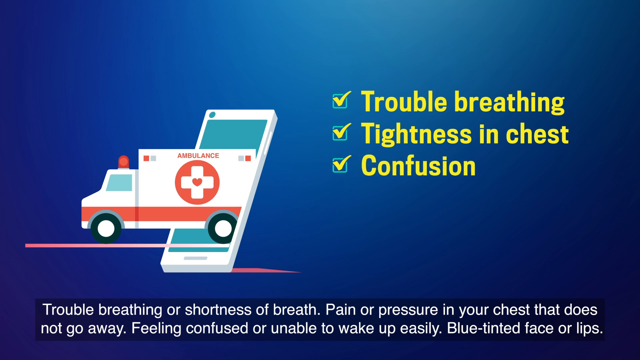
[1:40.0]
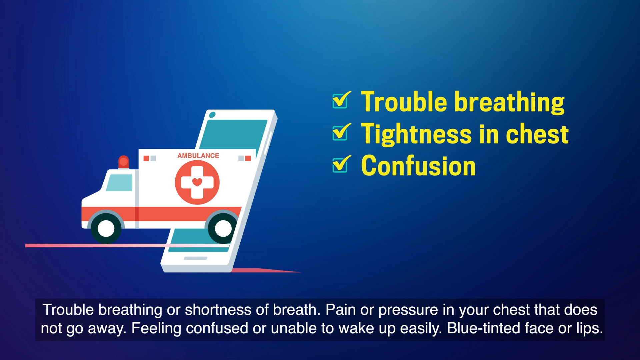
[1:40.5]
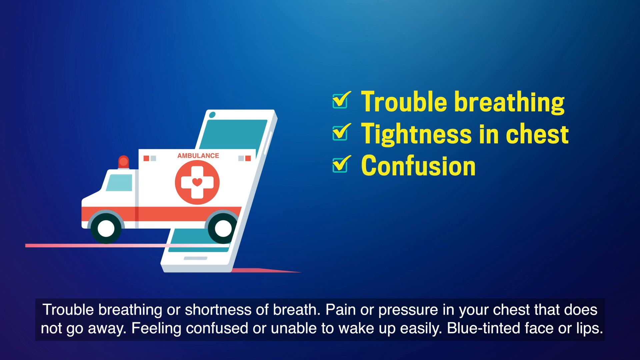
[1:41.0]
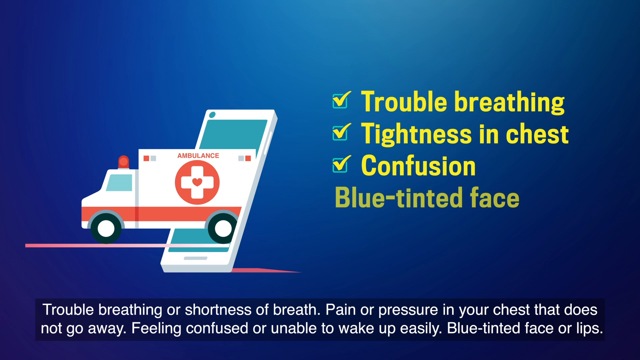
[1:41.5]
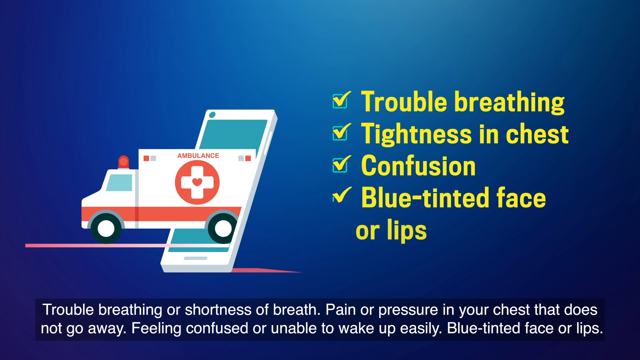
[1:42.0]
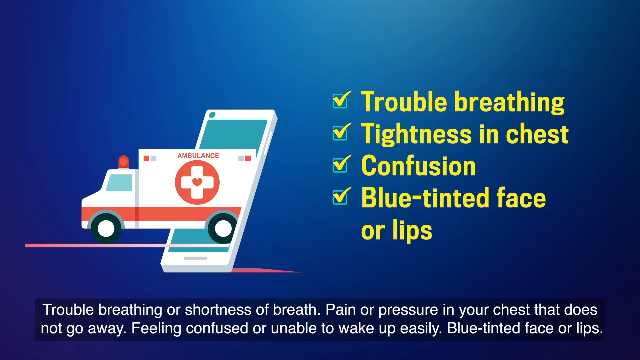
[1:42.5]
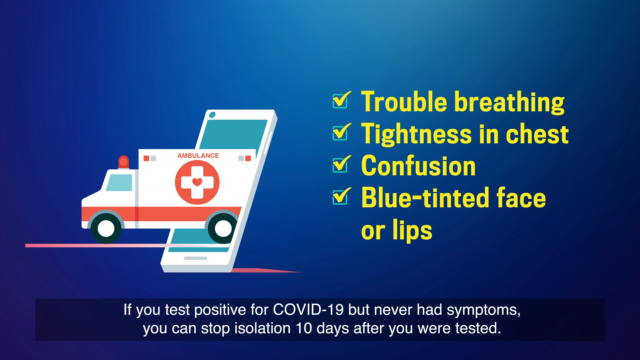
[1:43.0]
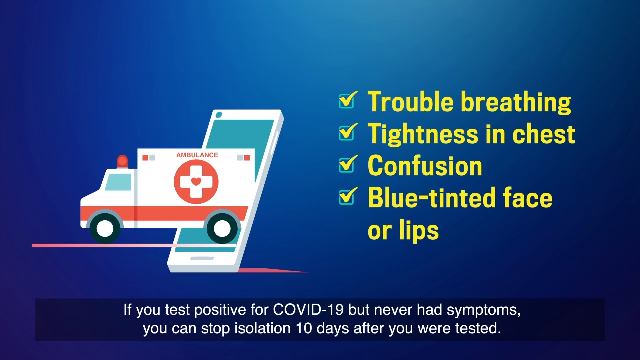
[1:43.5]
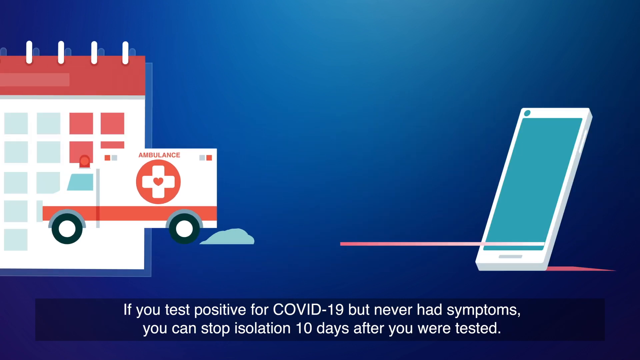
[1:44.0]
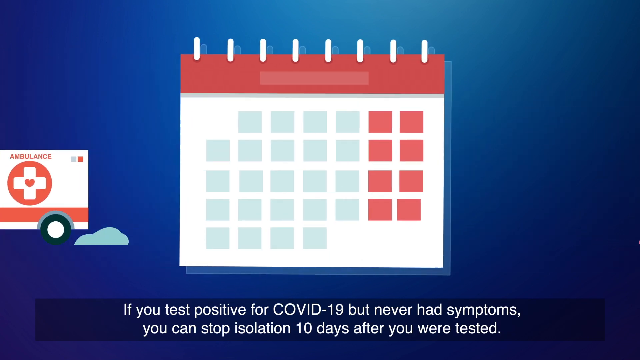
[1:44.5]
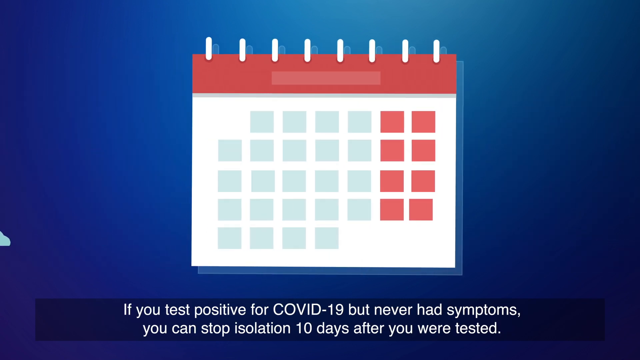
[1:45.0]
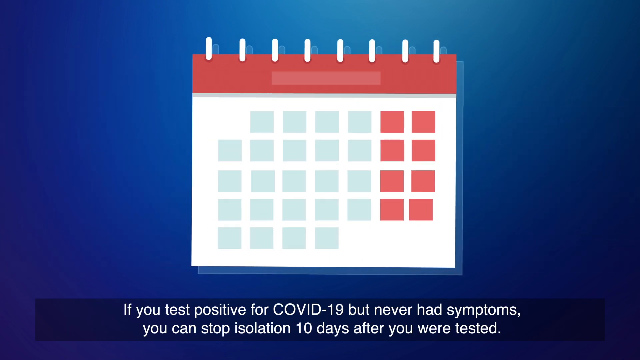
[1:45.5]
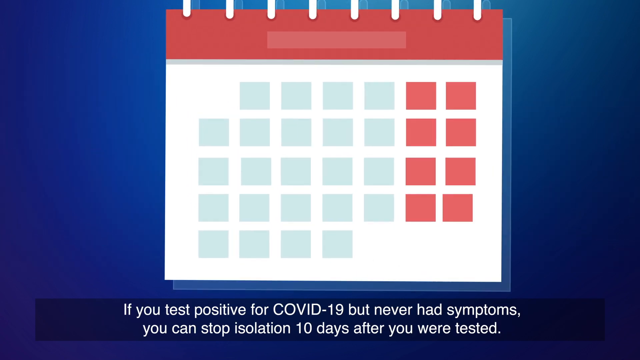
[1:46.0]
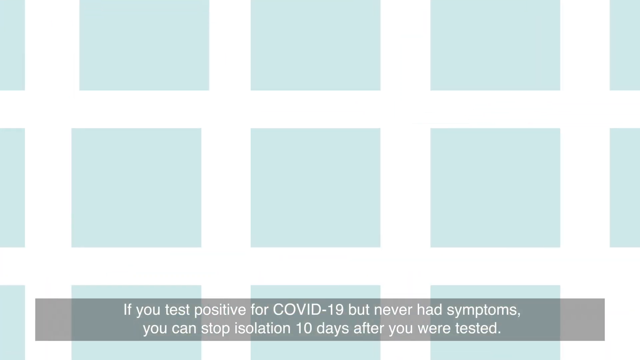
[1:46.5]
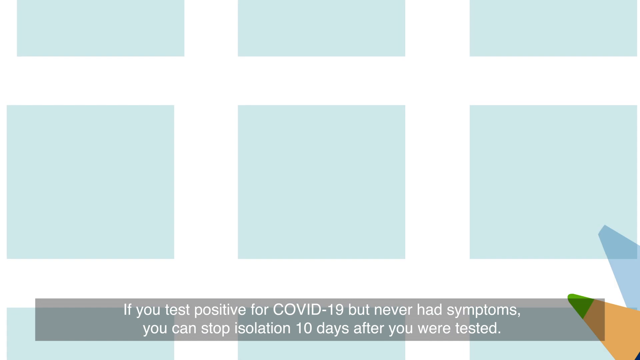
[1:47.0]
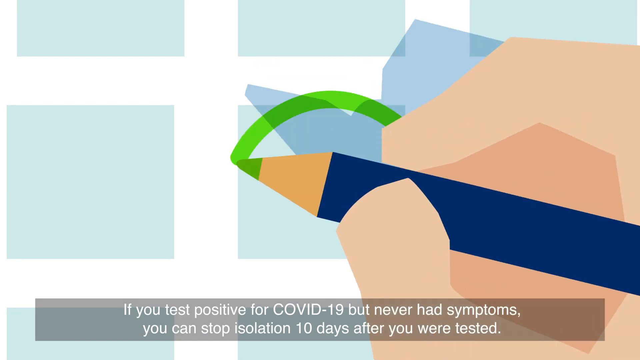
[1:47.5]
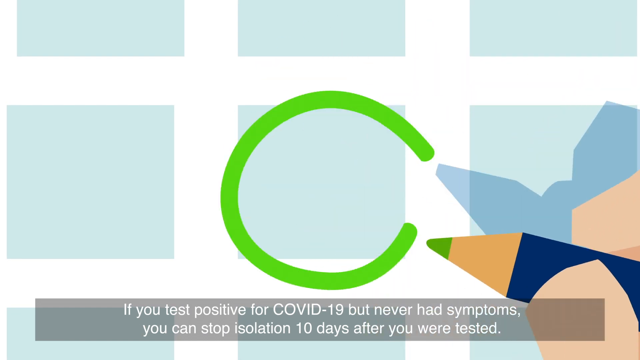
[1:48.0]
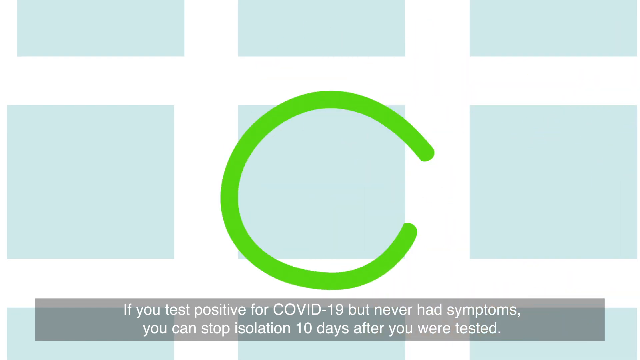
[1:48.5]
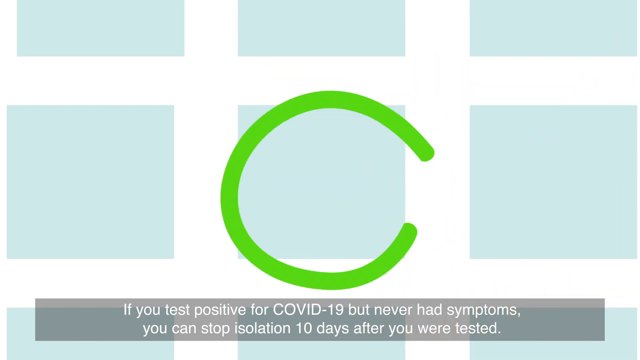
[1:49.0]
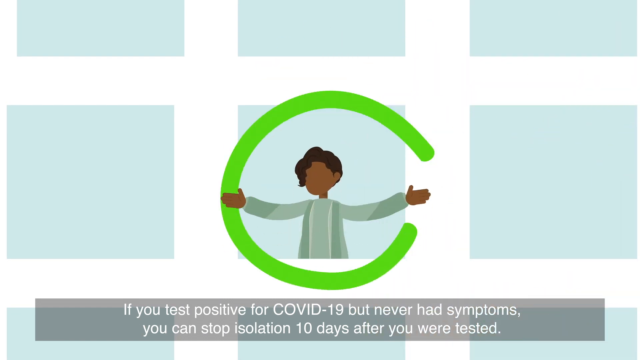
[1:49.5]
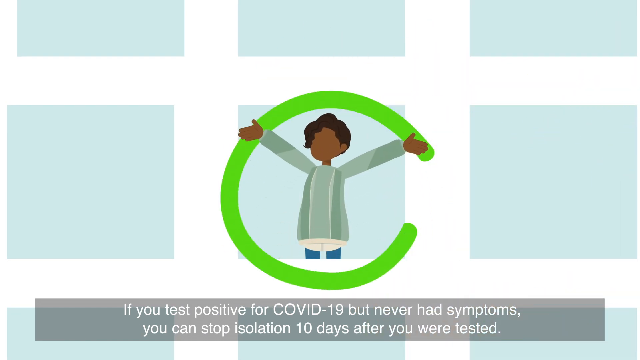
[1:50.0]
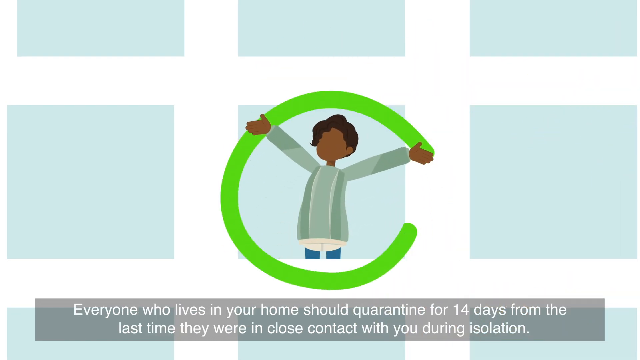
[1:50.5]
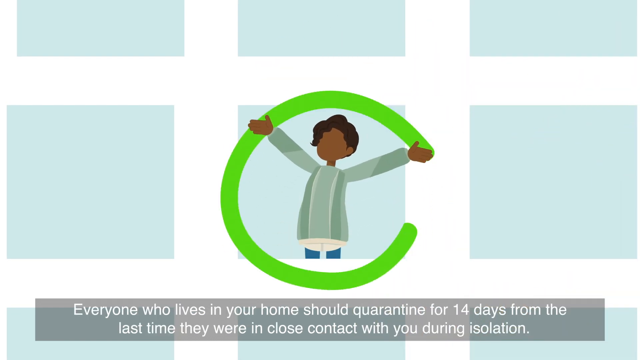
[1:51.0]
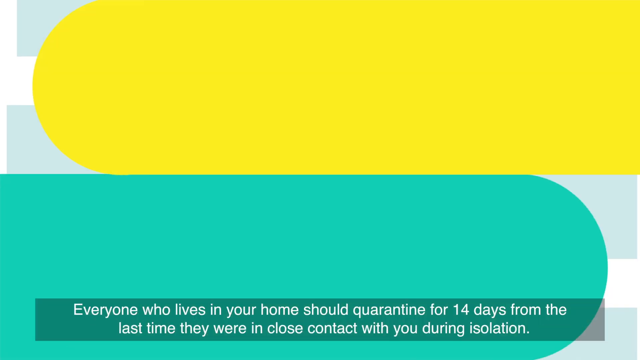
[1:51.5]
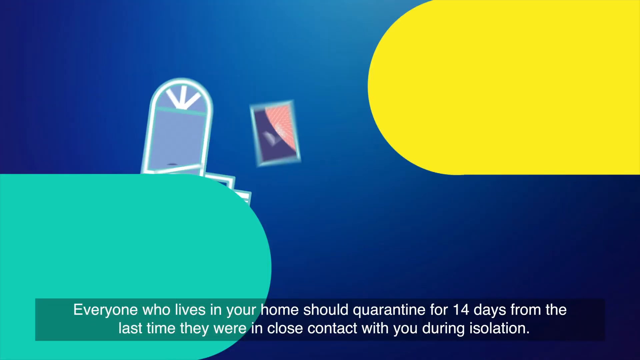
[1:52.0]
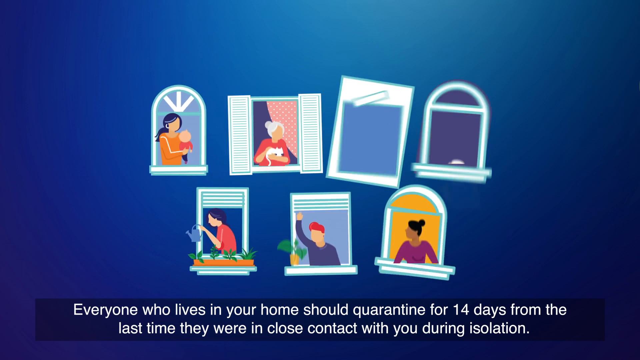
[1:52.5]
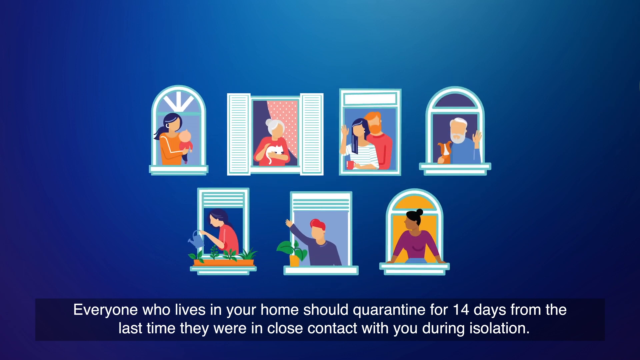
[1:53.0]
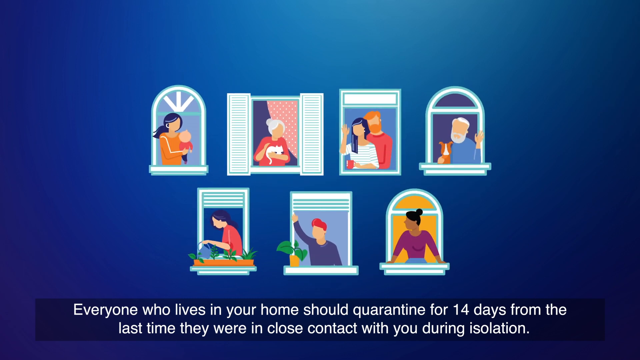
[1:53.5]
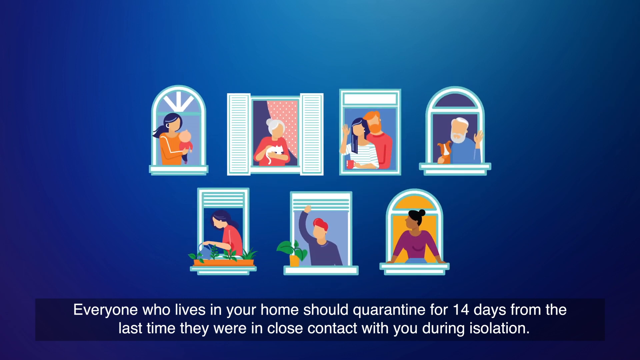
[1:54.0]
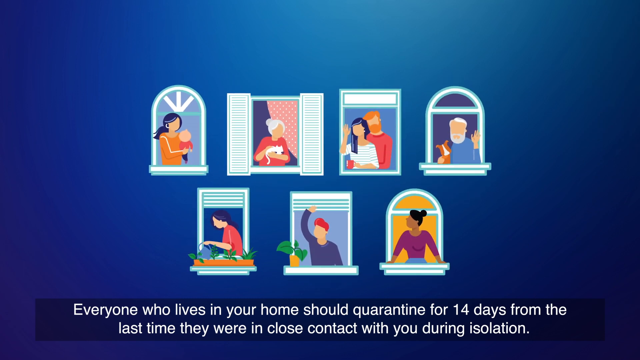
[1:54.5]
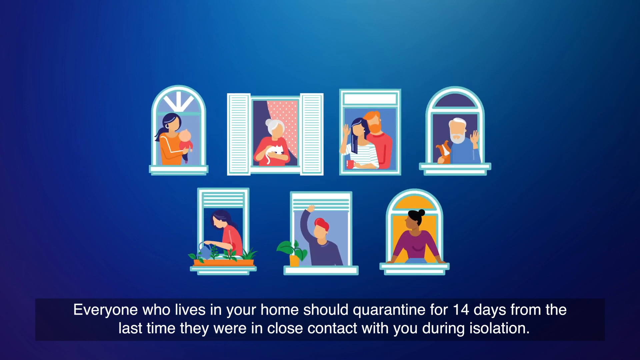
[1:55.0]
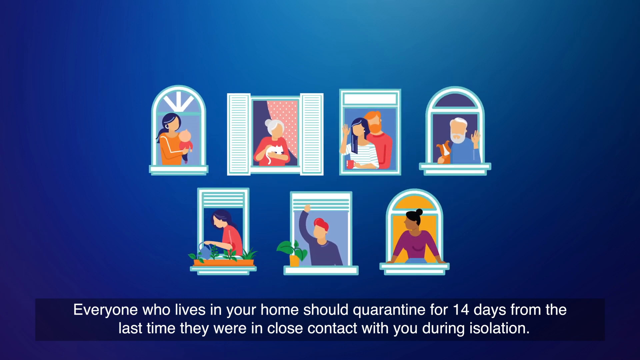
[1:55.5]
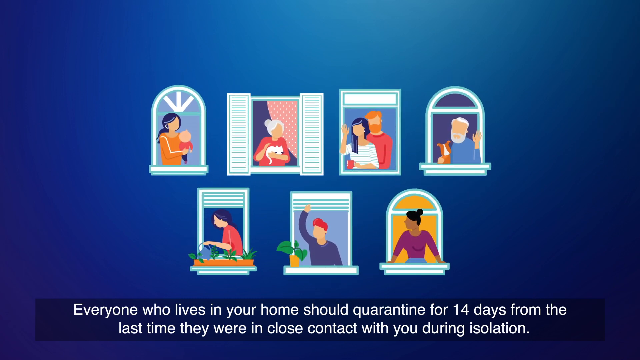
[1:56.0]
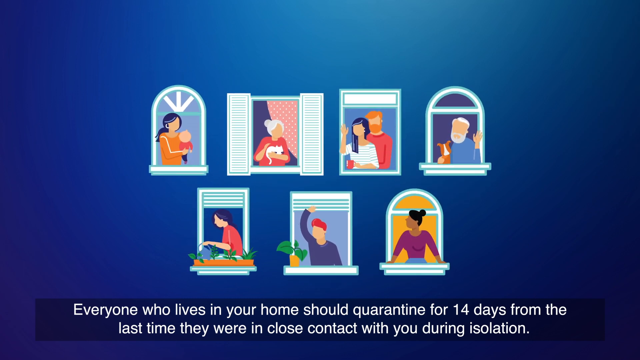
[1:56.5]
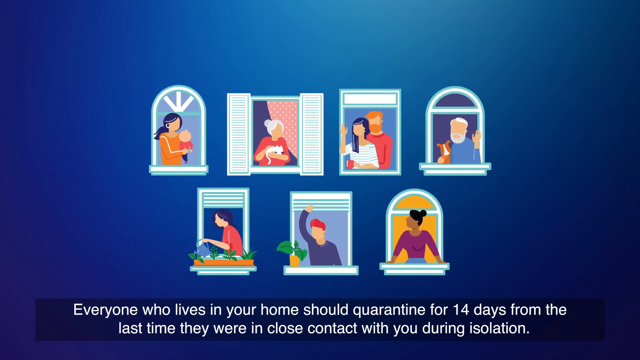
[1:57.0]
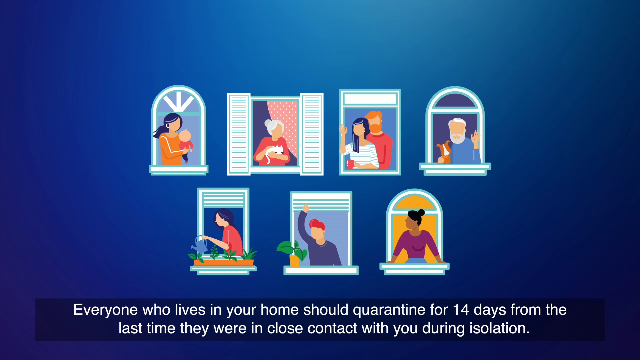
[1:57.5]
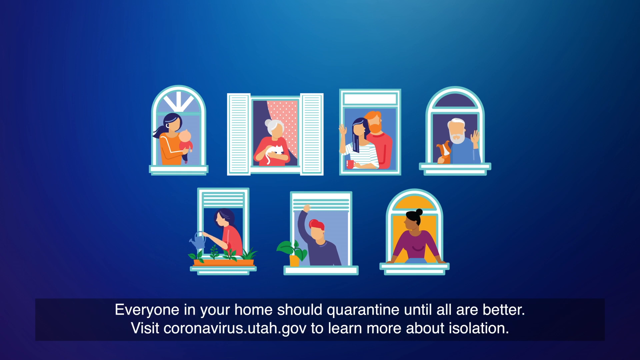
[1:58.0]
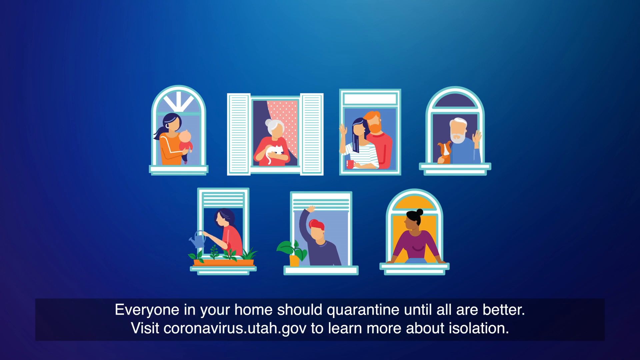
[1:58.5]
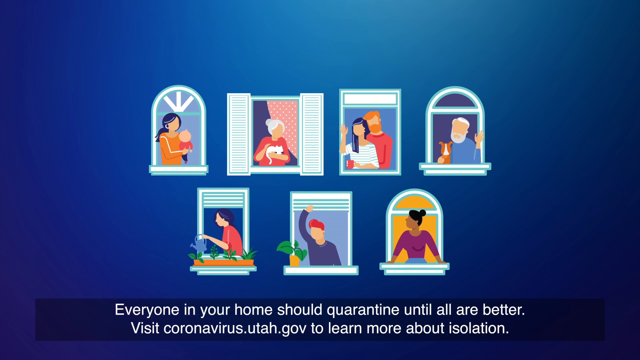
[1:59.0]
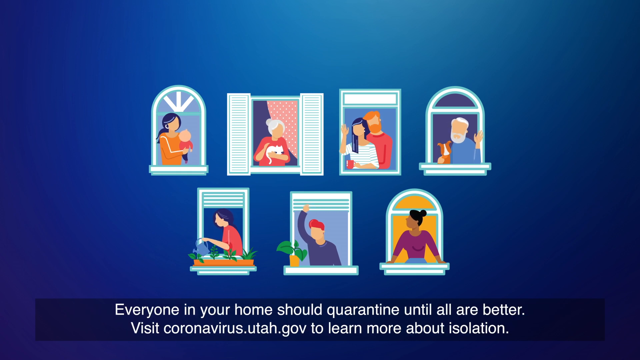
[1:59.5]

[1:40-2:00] A cell phone is sort of in the middle or left of the screen, and an ambulance is driving out of it towards the left side of the screen. The ambulance has a red light on top of its cab and a red stripe that goes across its side down towards the wheels. In the center of the back of the ambulance is a yellow circle with a white cross on it and a red heart in the center of the cross. Above the circle is the word "AMBULANCE" in red. On the right side of the screen are three boxes, one above the other, each with a check mark in it. To the right of the check marks, the text reads "TROUBLE BREATHING", "TIGHTNESS IN CHEST" and "CONFUSION".